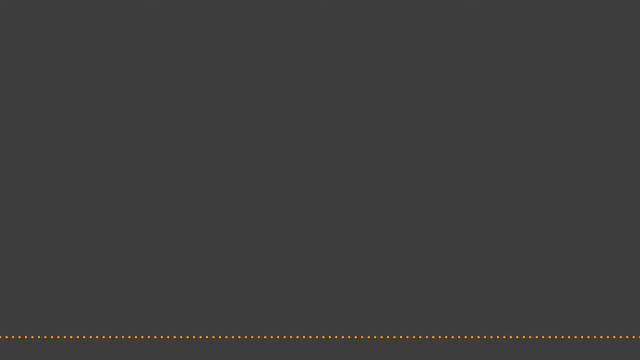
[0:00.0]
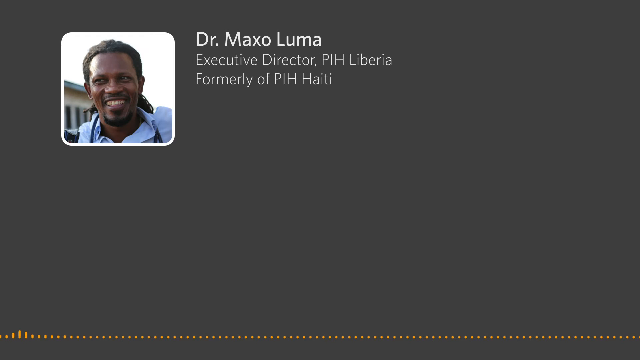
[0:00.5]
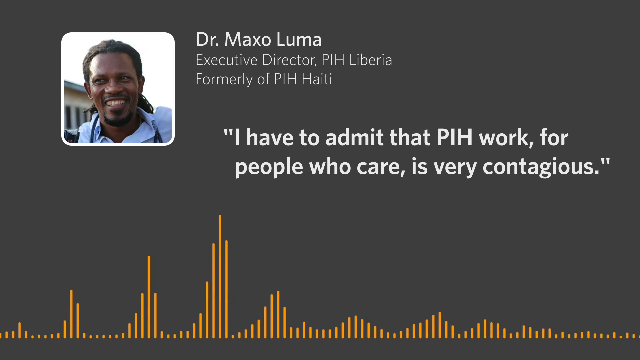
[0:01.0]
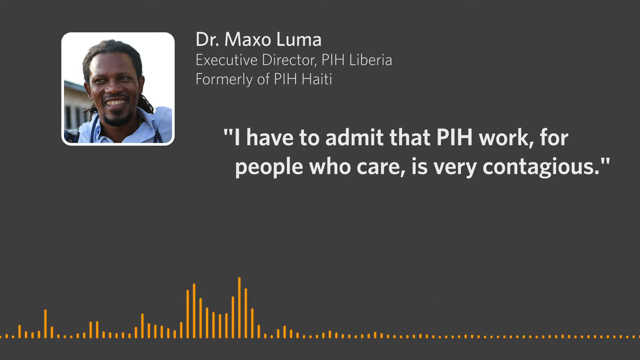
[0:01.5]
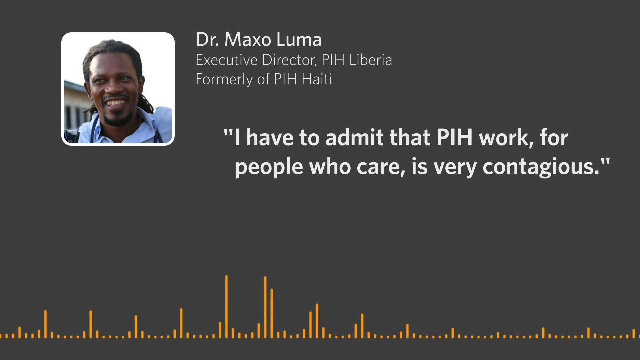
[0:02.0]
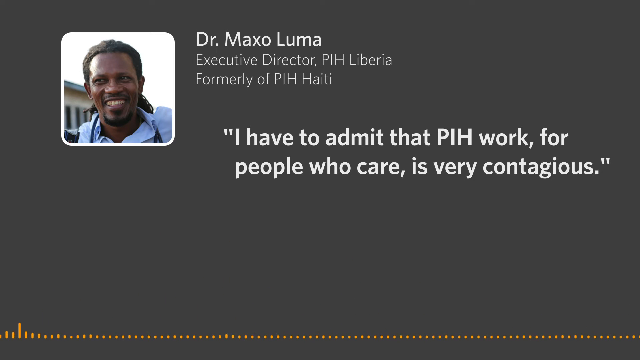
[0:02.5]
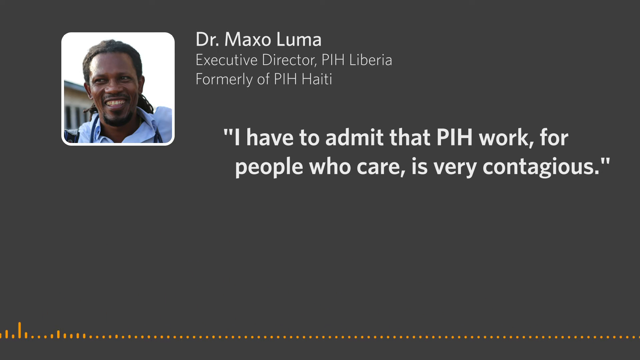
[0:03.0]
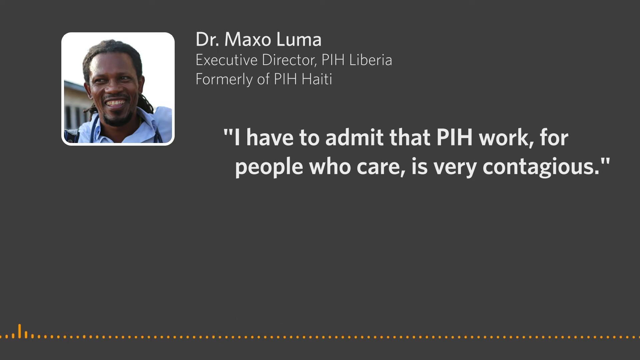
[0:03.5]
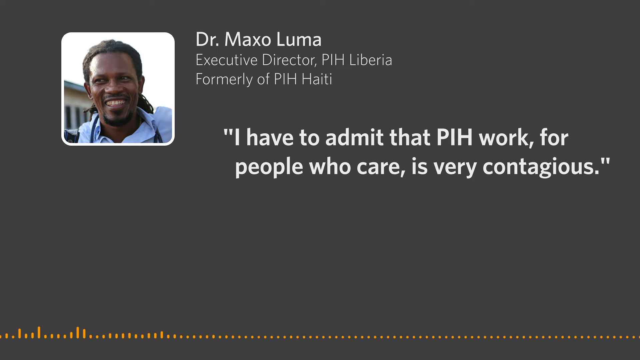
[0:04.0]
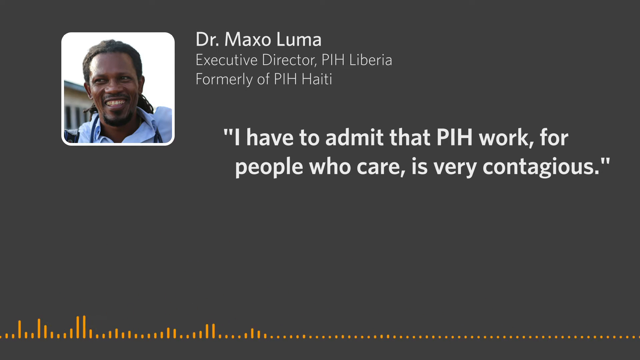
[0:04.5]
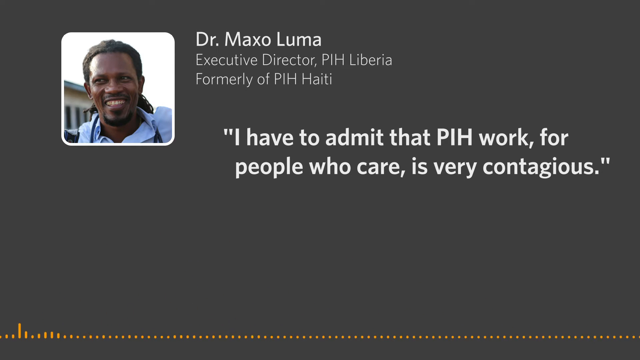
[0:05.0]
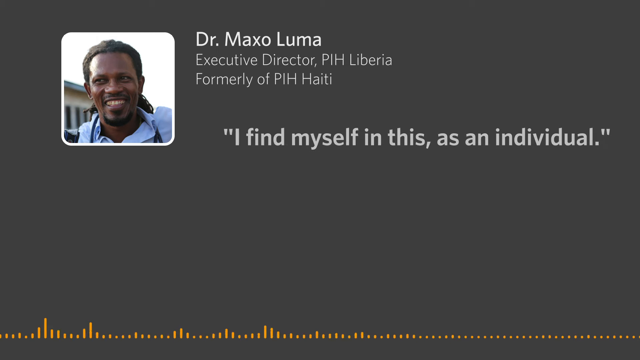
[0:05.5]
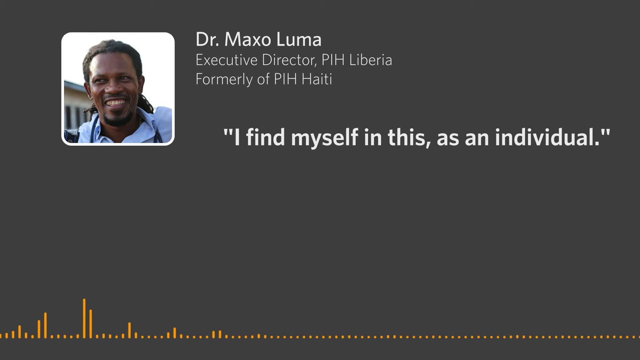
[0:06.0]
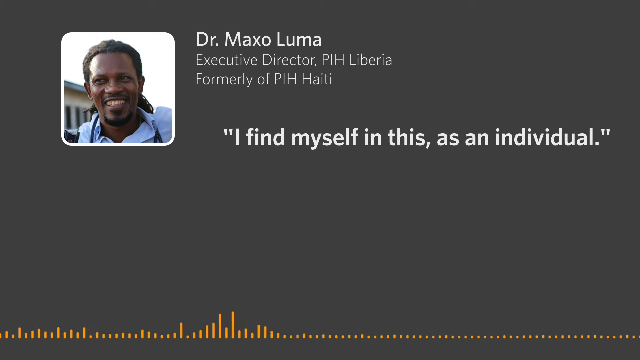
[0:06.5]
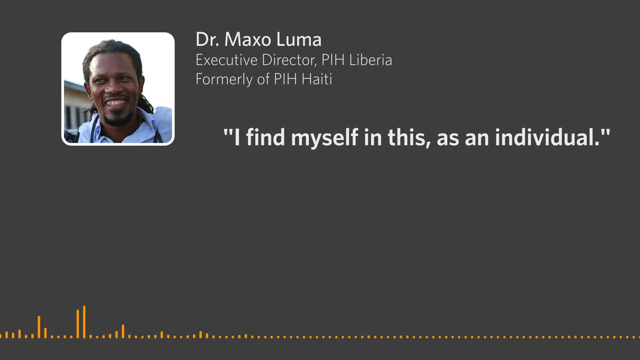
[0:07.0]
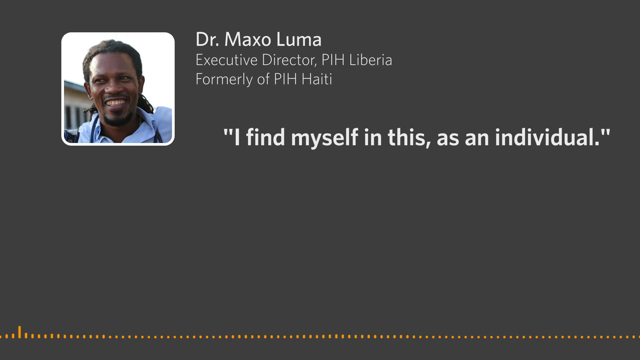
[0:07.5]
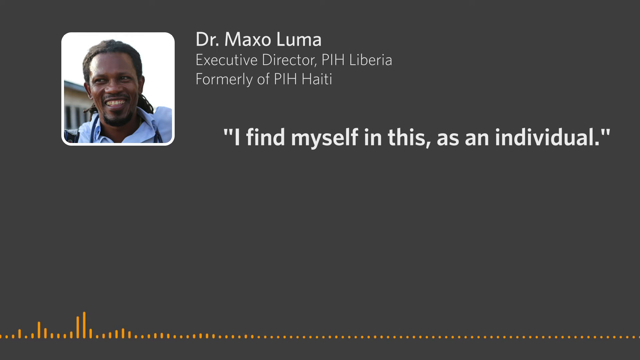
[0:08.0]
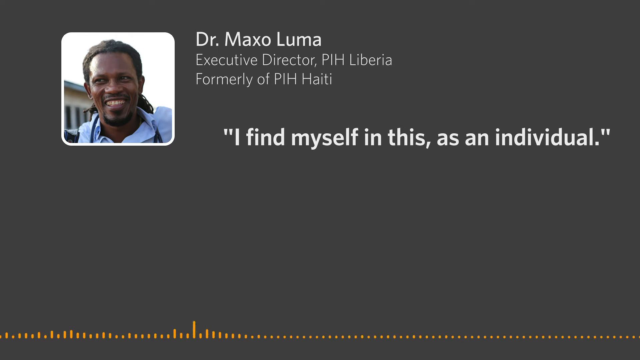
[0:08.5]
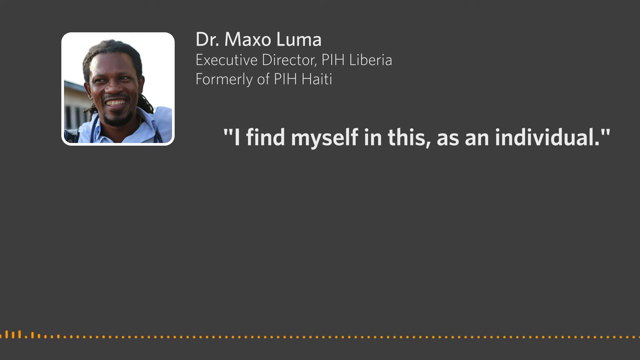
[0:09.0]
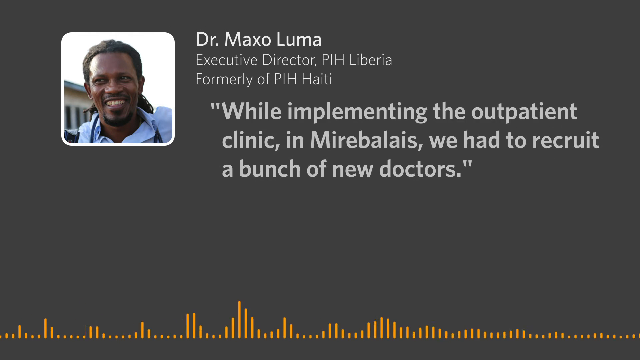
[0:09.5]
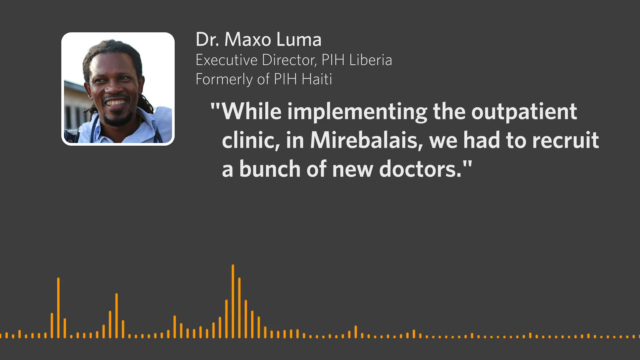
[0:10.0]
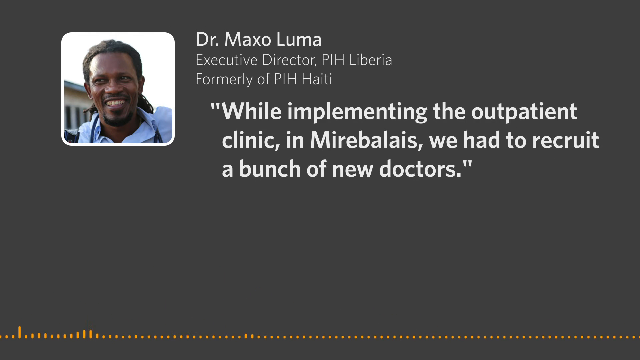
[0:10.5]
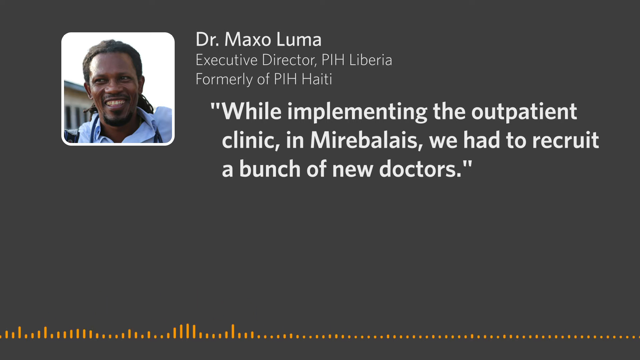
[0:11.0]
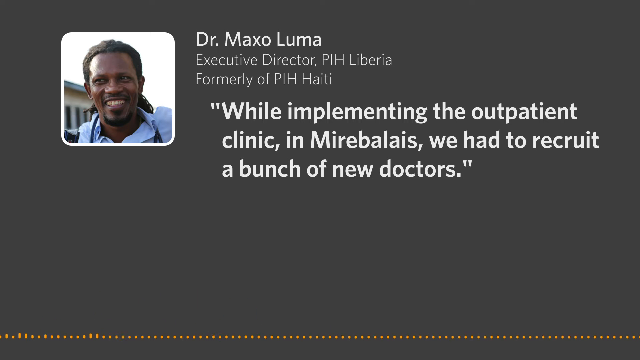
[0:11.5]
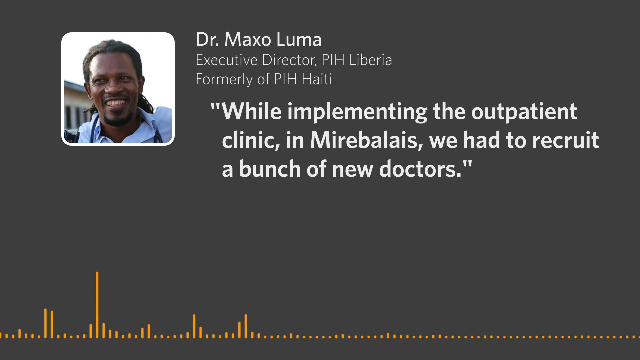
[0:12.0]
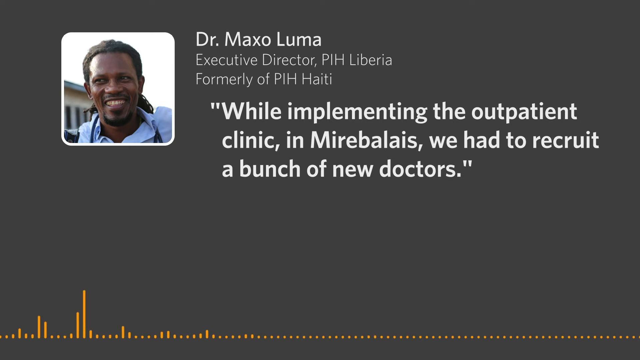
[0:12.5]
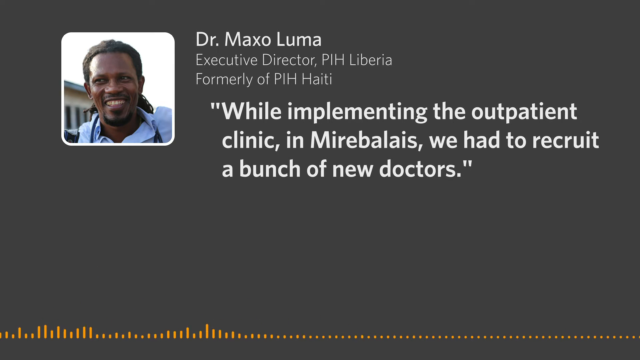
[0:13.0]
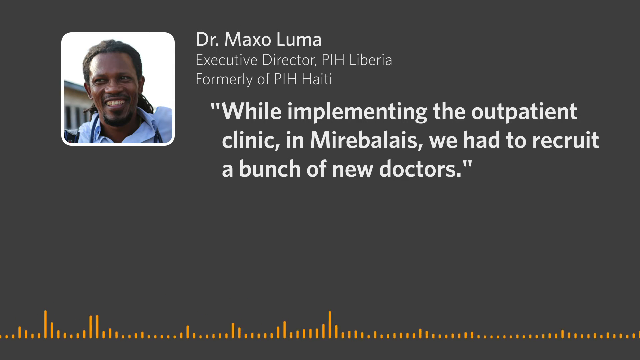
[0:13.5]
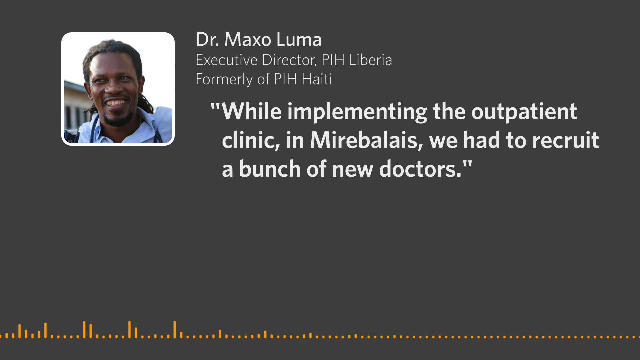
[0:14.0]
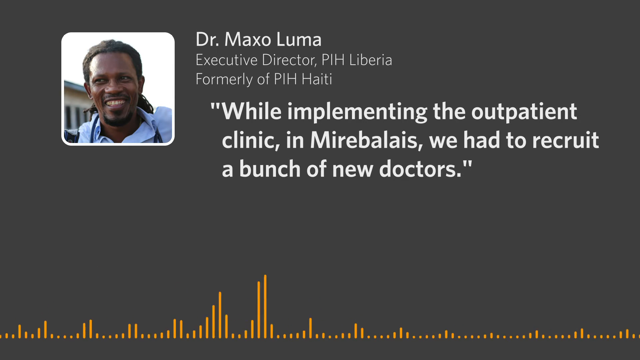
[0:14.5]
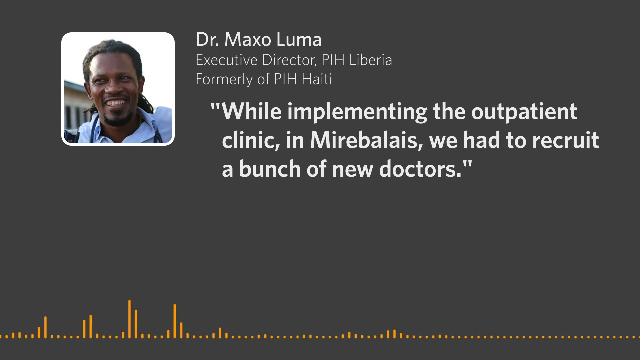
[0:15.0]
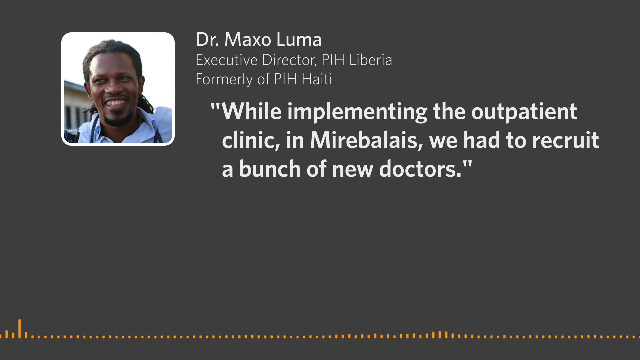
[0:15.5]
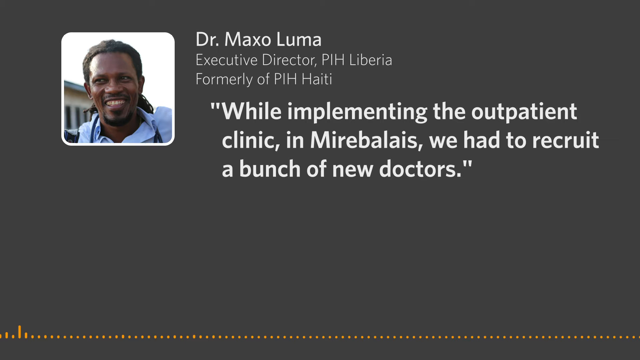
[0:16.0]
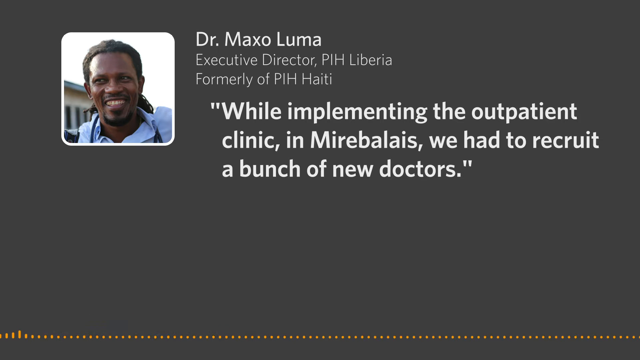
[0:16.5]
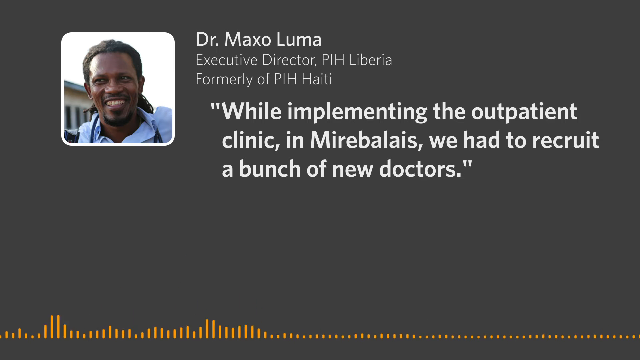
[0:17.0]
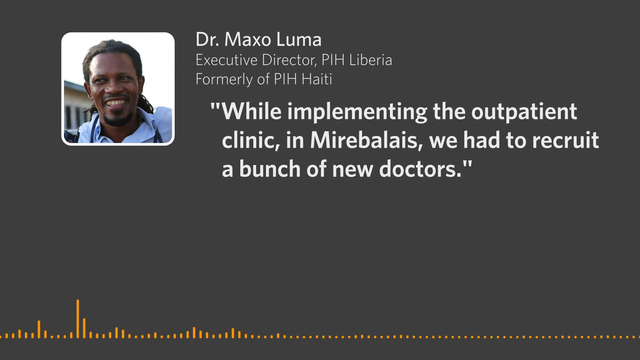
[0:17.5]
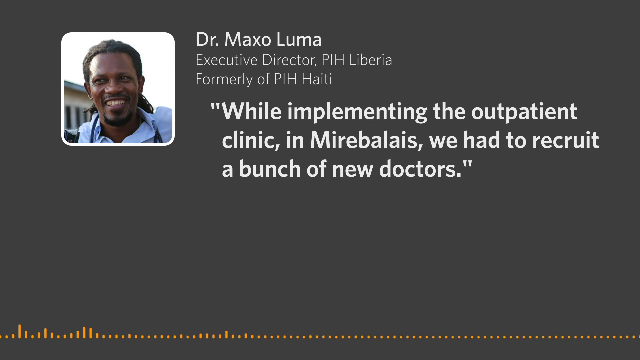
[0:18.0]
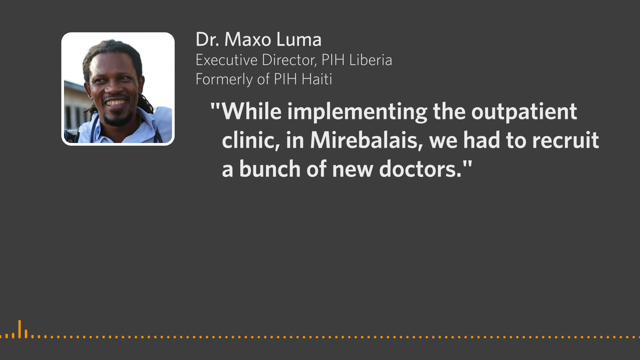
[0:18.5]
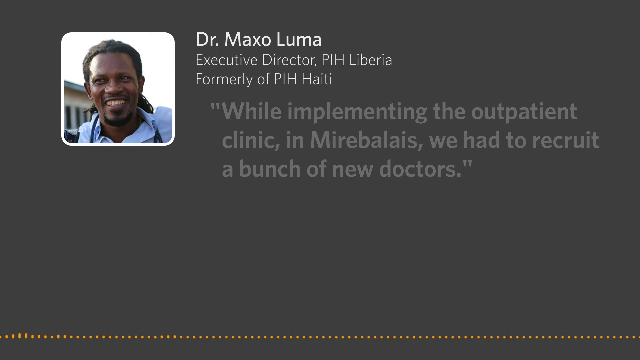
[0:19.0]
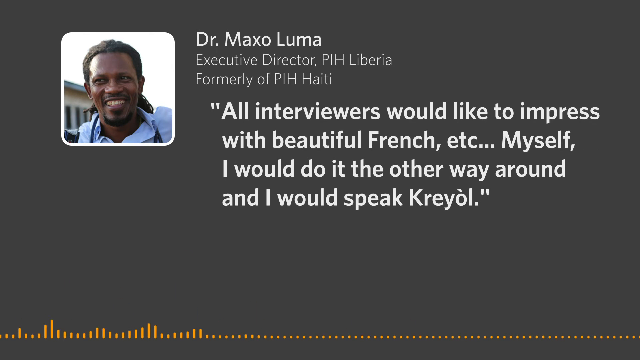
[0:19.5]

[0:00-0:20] The video opens on a blank, dark grey screen. An image suddenly appears in a small box at the top left: a black man with black hair and a black goatee, wearing a blue shirt. He is smiling and looking towards the camera, though his eyes are darted towards the left of the screen. To the right of the image, the words "Dr Maxo luma" appear in bold white text. Underneath, in smaller white text, it reads "Executive Director, PIH, Liberia", and below that, "formerly PIH, Haiti". After some space below, bold white text in quotation marks appears, reading "I have to admit that PIH work for people who care is very contagious." At the bottom of the screen, orange bars move to represent the sound waves of the voice recording as it plays. The text in the centre changes to read "I find myself in this as an individual." while the orange bars keep moving. The text then changes to "While implementing the outpatient clinic in Mirebalais, we had to recruit a bunch of new doctors." and then to "all interviewers would like to impress with beautiful French, et cetera. Myself, I would like to do it the other way around, and I would like to speak Kreyol." The orange bars continue to bounce up and down with the sound.